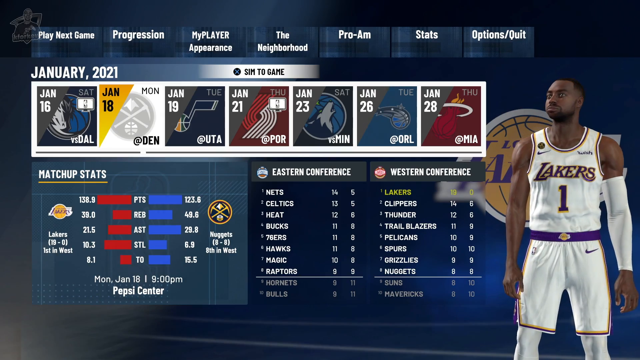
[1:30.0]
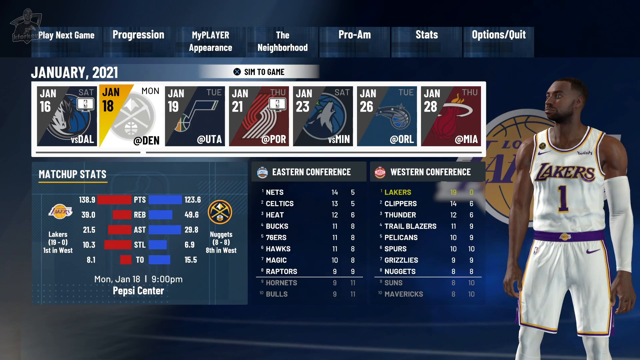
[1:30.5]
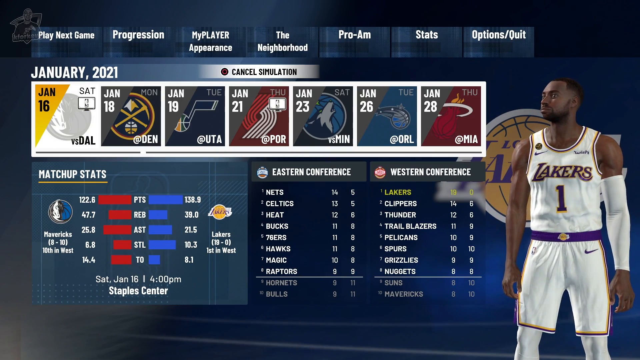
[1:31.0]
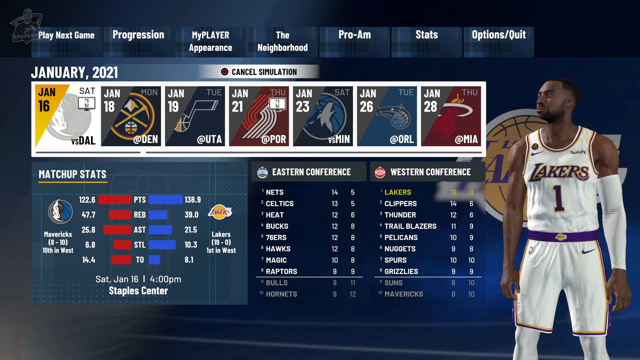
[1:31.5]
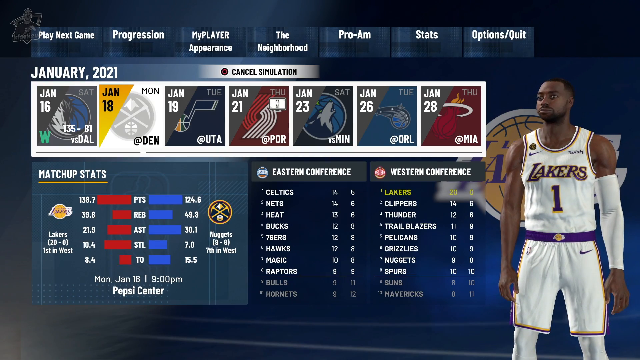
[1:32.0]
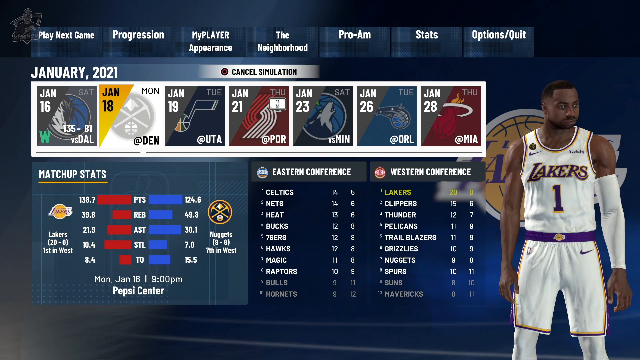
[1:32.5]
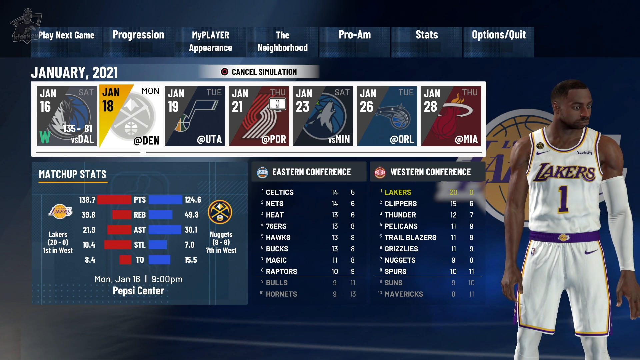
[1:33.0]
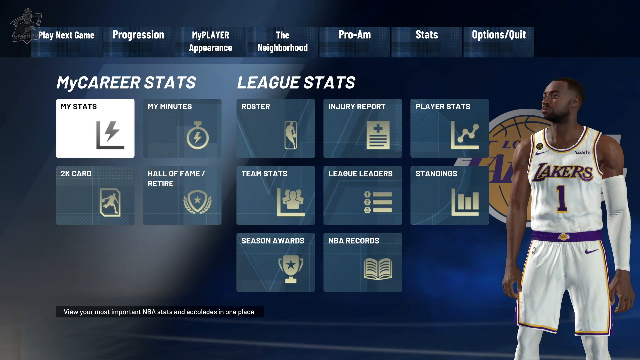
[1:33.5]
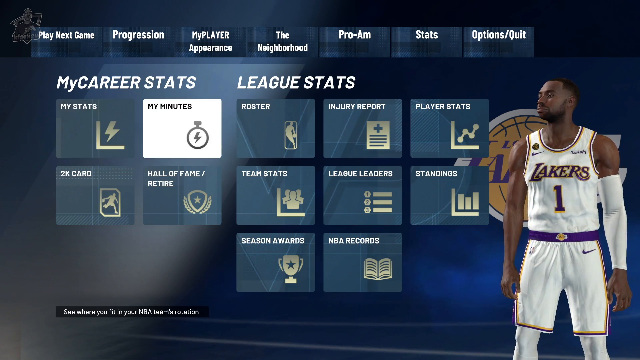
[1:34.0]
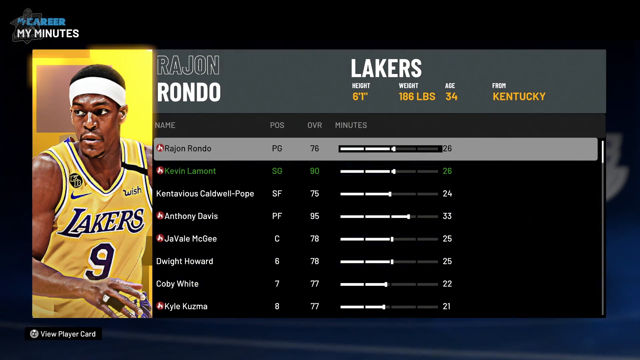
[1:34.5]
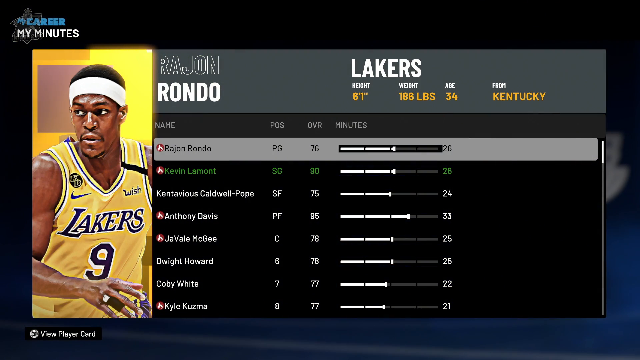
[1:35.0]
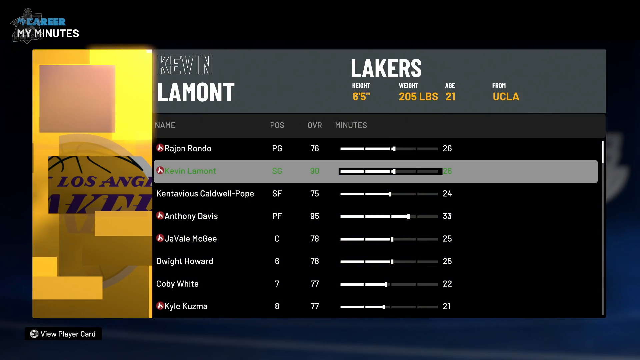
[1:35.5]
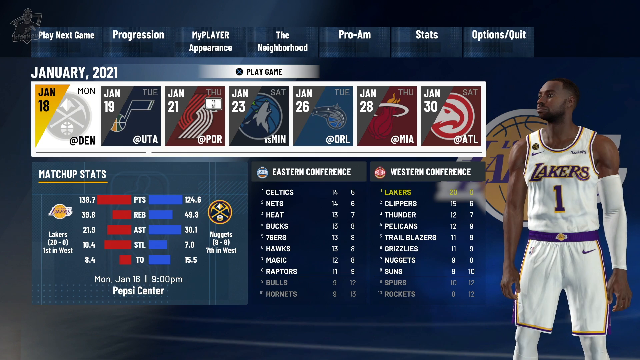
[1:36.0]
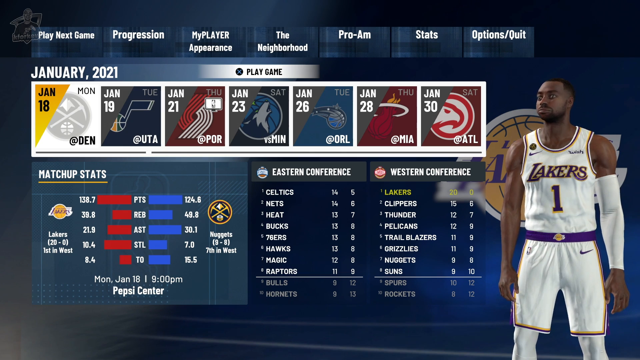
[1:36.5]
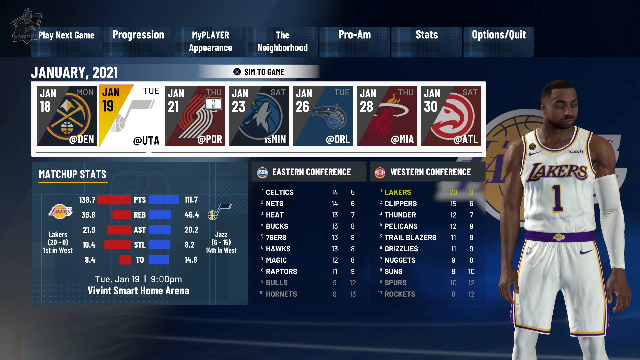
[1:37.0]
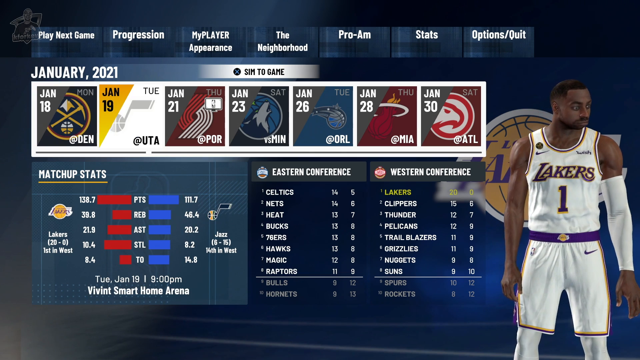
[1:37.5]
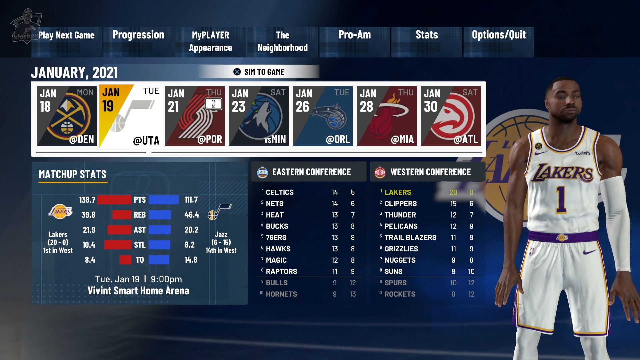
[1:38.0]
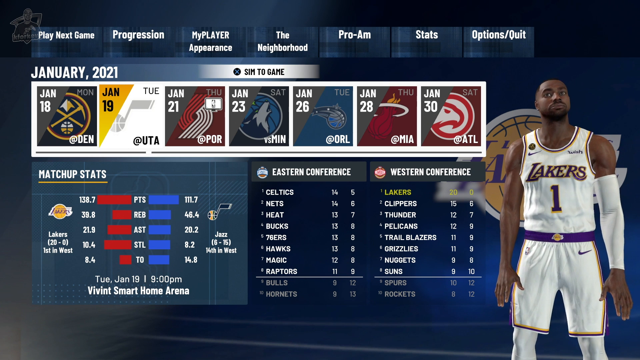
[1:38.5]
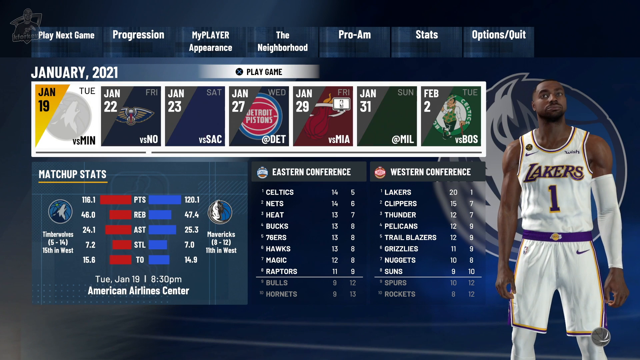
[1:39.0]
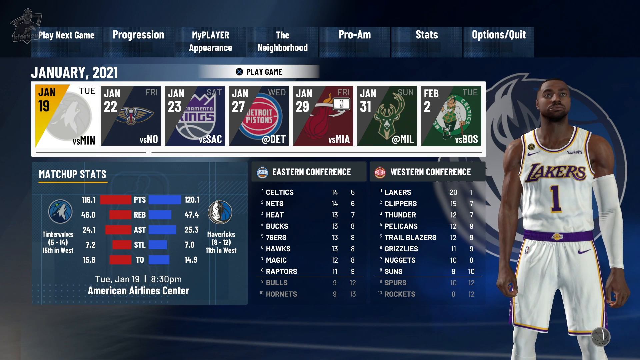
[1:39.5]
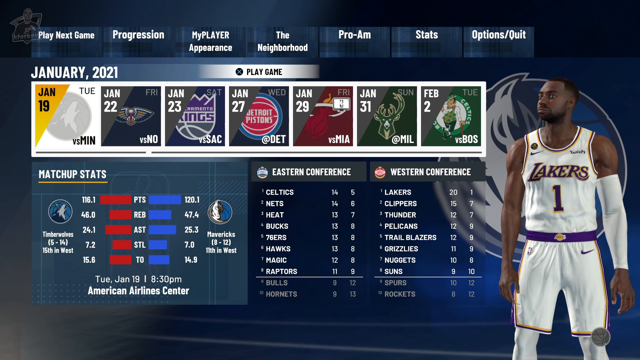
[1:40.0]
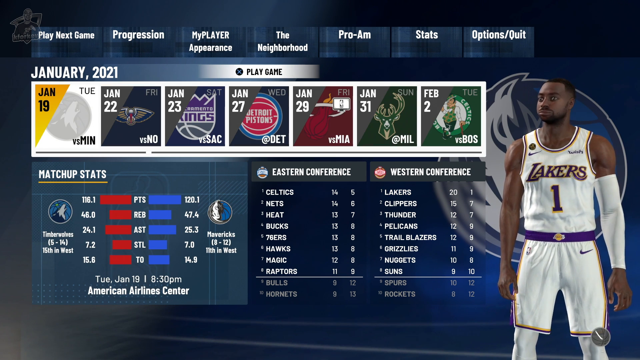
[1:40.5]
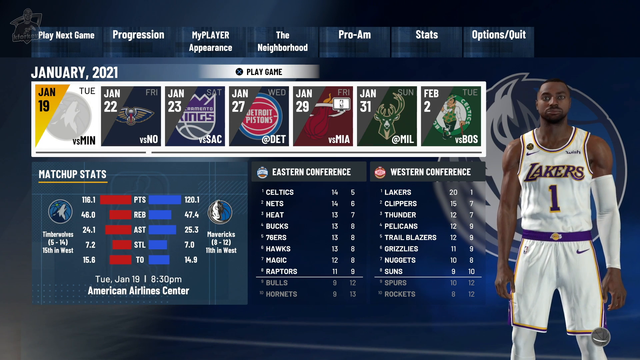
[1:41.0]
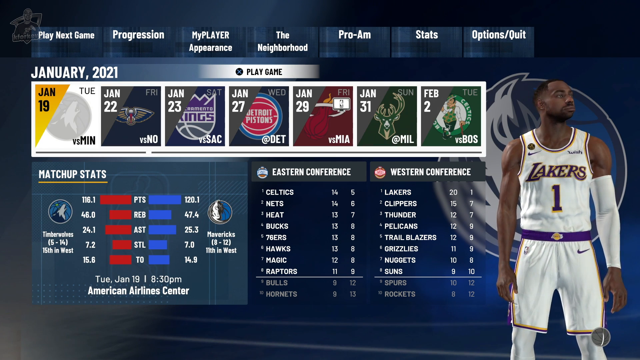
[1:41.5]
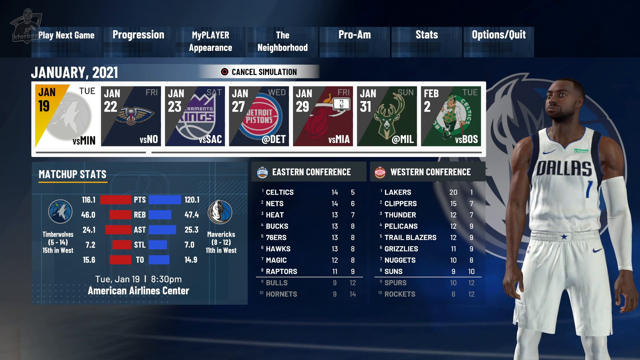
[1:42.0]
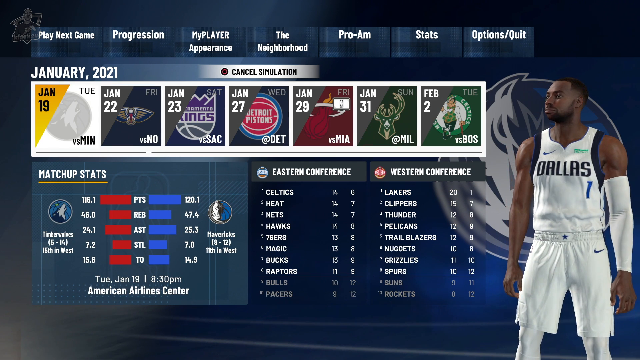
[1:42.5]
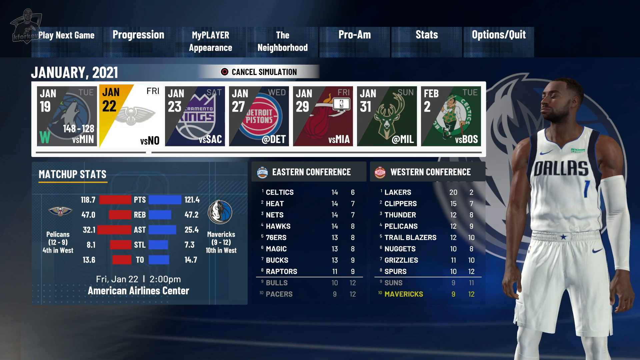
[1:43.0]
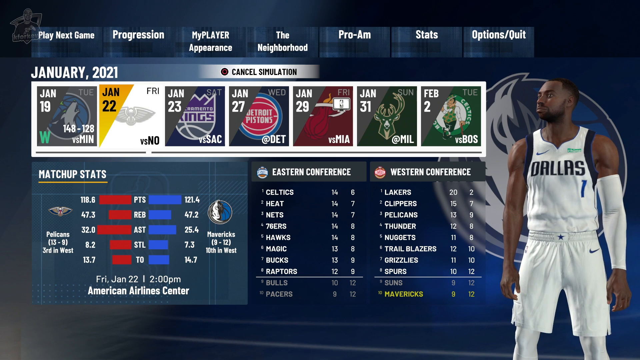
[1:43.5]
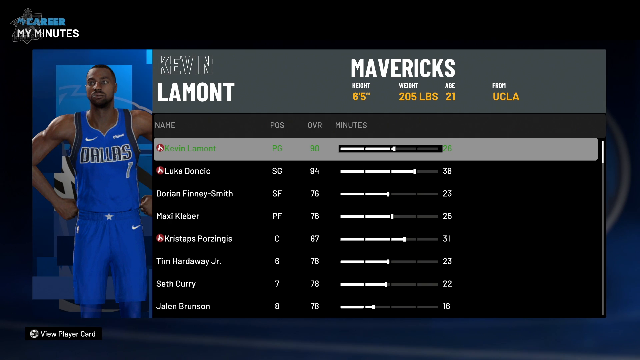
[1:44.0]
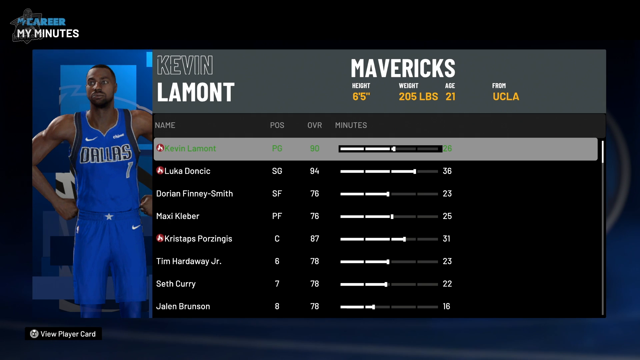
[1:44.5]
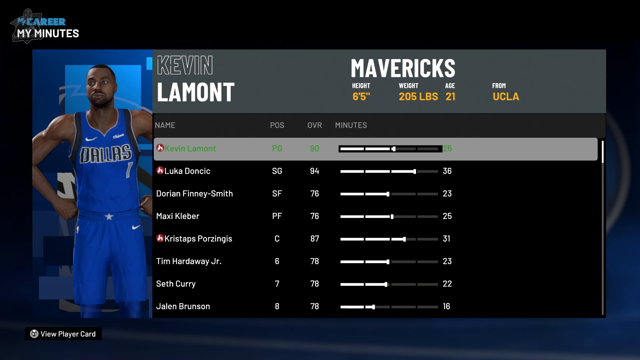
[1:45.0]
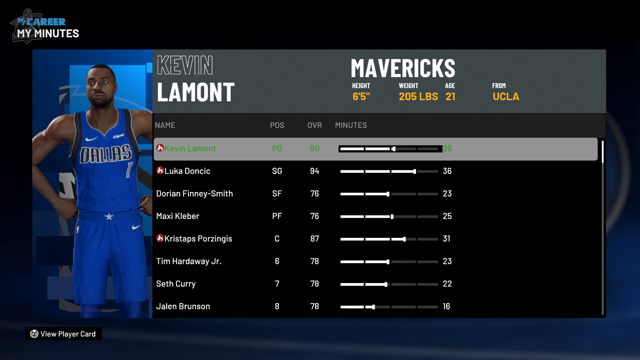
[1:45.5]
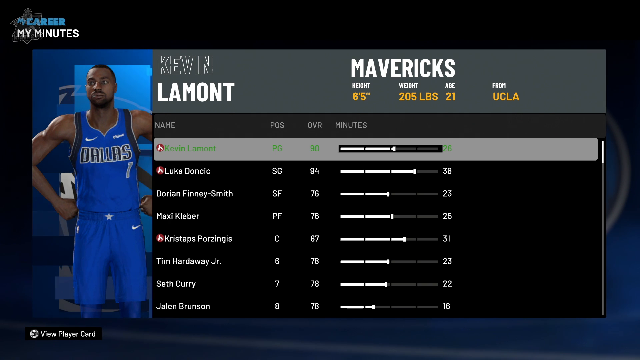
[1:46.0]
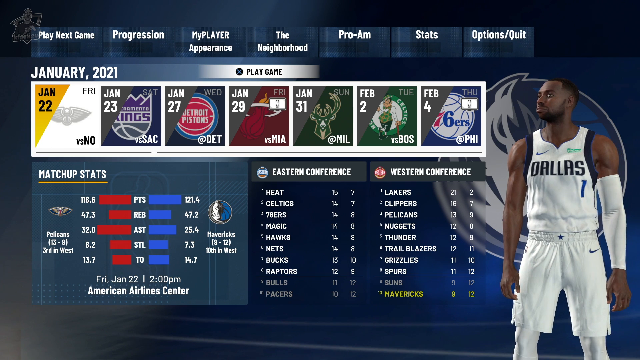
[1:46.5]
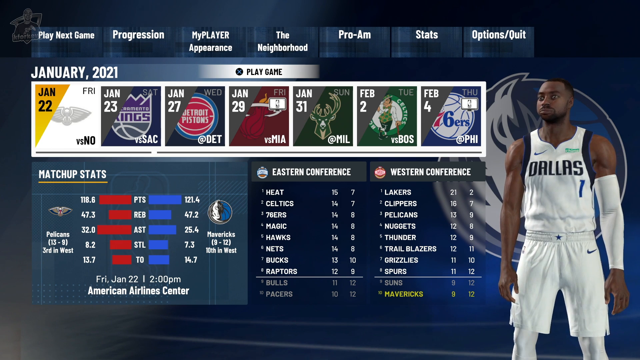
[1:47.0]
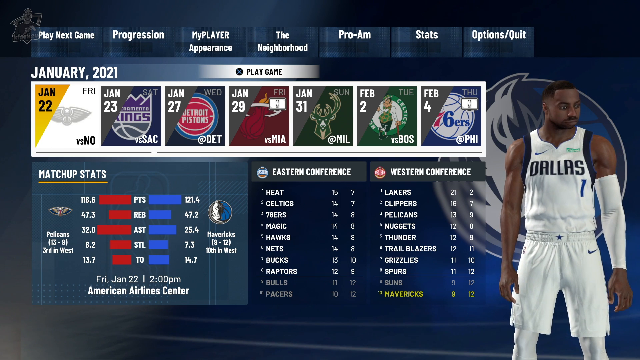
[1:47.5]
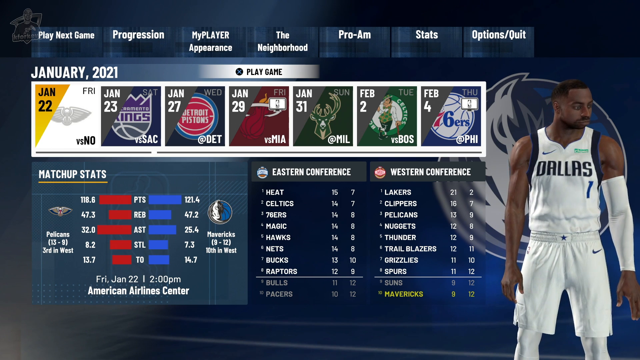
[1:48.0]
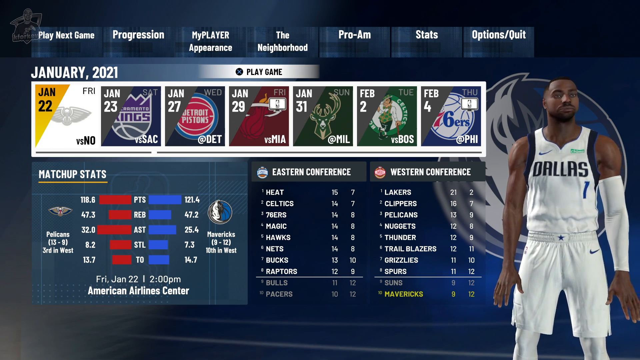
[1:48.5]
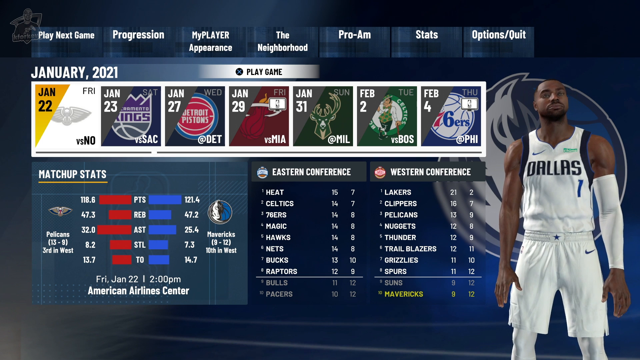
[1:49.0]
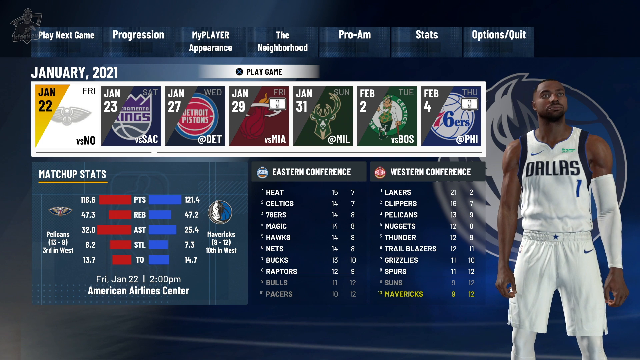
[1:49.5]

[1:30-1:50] The video appears to show a lot of scrolling and selecting through the menus of an NBA game. Headers across the top read, in white text on blue rectangles, "Play Next Game", "Progression", "My Player Appearance", "The Neighborhood", "Pro-Am", "Stats" and "Options/Quit". In the center of the menu, "January 2021" appears at the top left, followed by seven squares from left to right, each with a date at the top left and an "at" or "versus" opponent at the bottom right, apparently the team's game schedule: January 16th versus Dallas in the leftmost square, then January 18th at Denver, January 19th at Utah, January 21st at Portland, January 23rd versus Minnesota, January 26th at Orlando and January 28th at Miami. At the bottom are matchup stats, Eastern Conference rankings and Western Conference rankings. On the right is the player avatar, apparently a black man wearing a white Lakers uniform with the number one and "Lakers" in purple on the chest. The dates are then gone through: first January 18th, second from the left, is highlighted in yellow; the selection scrolls left to highlight January 16th, then goes back to January 18th. January 16th now appears grayed out with a green W at the bottom left, apparently because it was auto-played. A menu then reads "My Career Stats" with four icons below it: My Stats, My Minutes, 2K Cards and Hall of Fame Retired. My Stats is currently selected, shown in white; the selection scrolls right to My Minutes, which is selected. A new menu appears with what looks like a list of names and minutes played. At the very top is Rajon Rondo with 26 minutes, and below it green text reads "Kevin Lamont" with 26 minutes, probably the player's name. The list is scrolled down to highlight Kevin Lamont, and then the menu is exited back to the original menu. January 19th is then highlighted in yellow and apparently selected; it becomes gray with a W for win at the bottom left. The player avatar now wears a Dallas uniform with the number one instead of the Lakers uniform. January 22nd is now highlighted. The minutes played menu is opened again and Kevin Lamont is selected; it now appears to show 26 and something like Mavericks. The view then returns to the main menu.